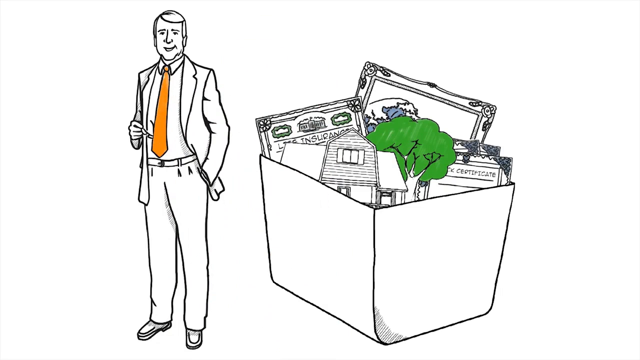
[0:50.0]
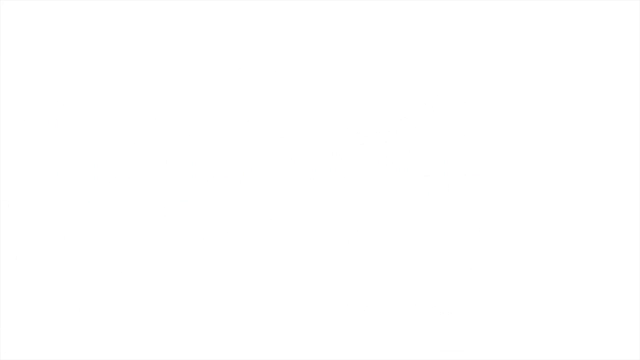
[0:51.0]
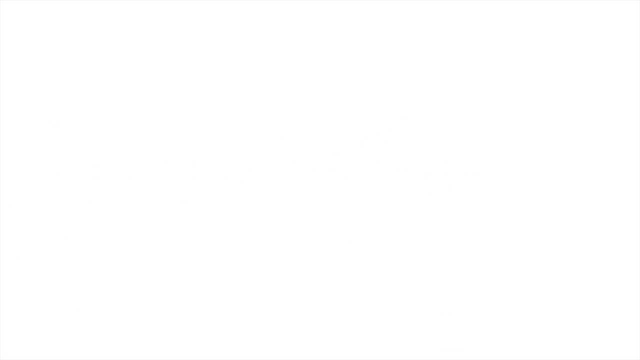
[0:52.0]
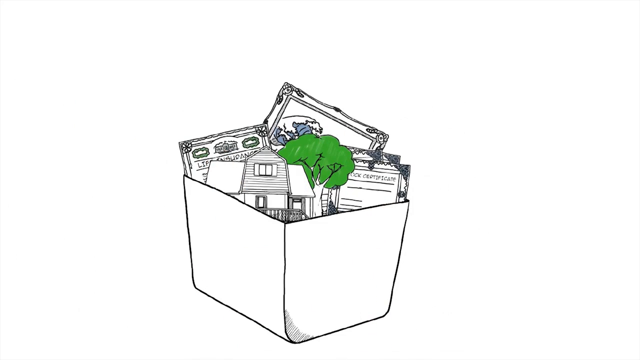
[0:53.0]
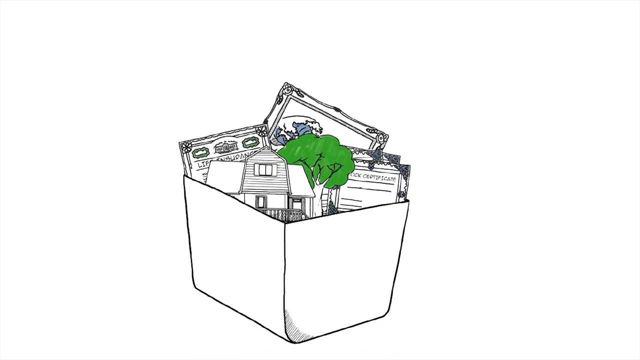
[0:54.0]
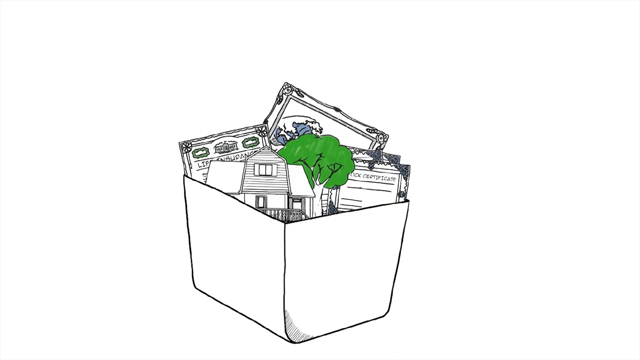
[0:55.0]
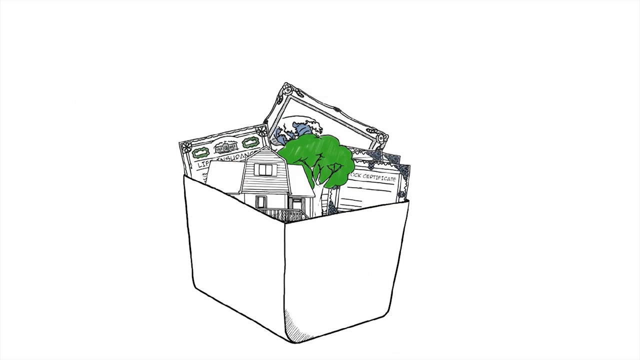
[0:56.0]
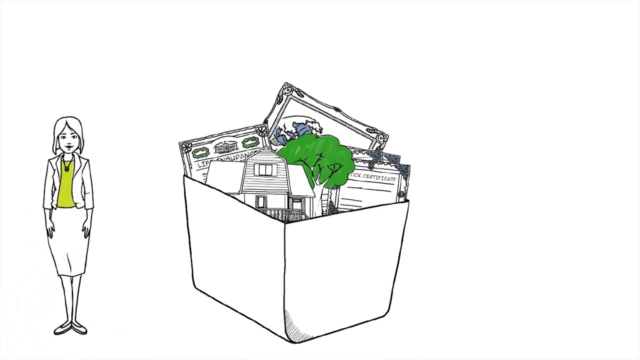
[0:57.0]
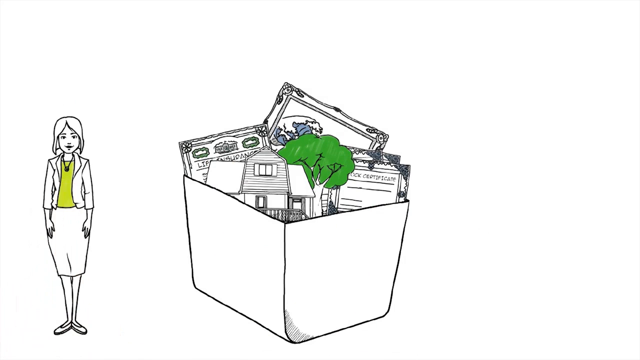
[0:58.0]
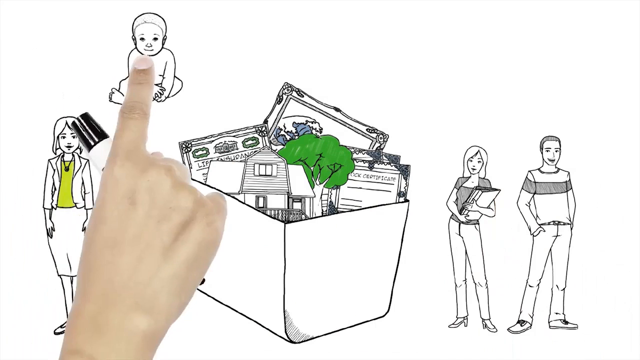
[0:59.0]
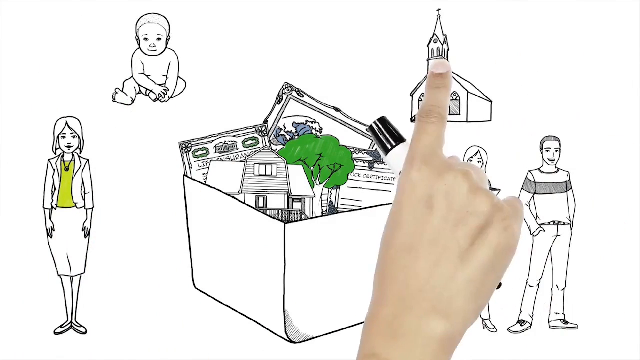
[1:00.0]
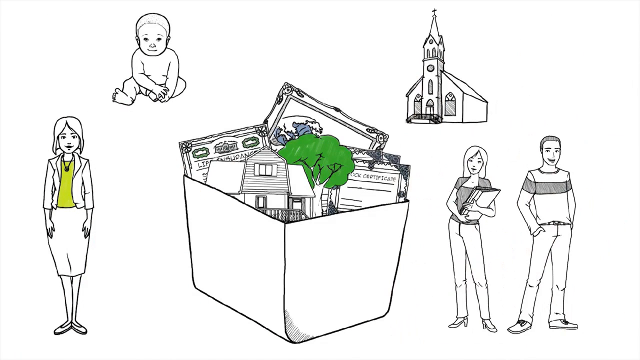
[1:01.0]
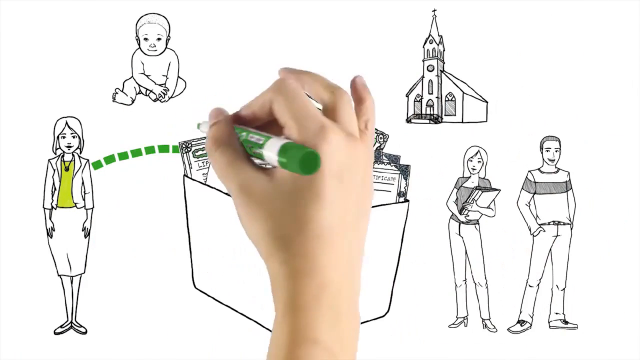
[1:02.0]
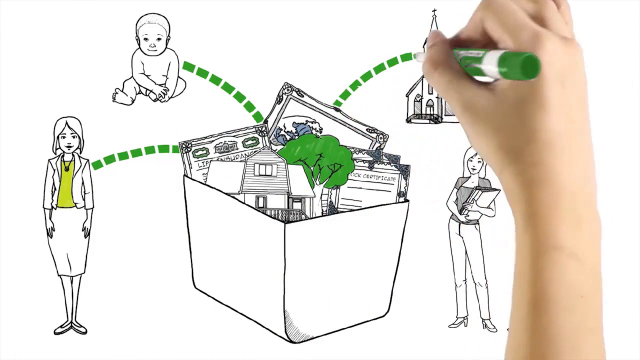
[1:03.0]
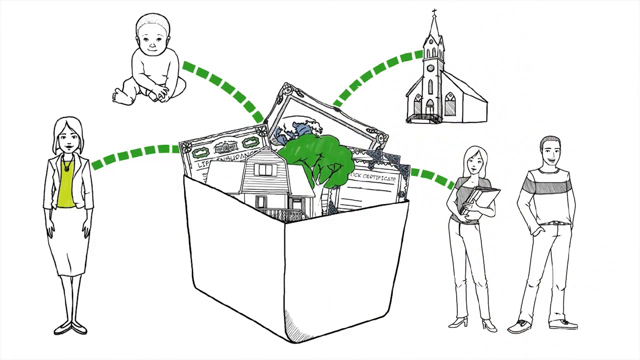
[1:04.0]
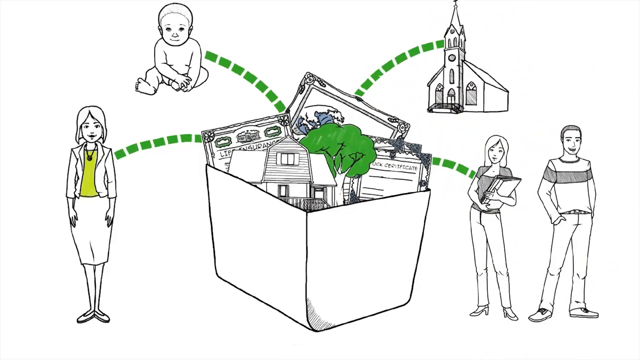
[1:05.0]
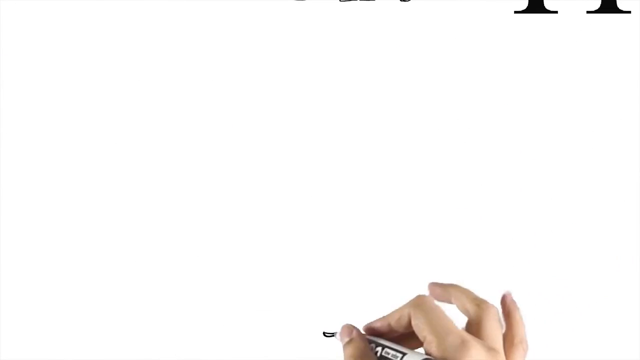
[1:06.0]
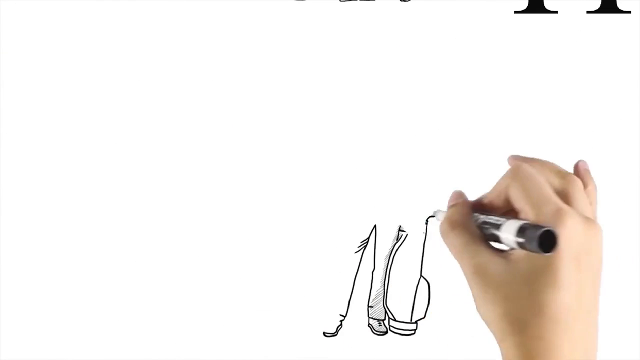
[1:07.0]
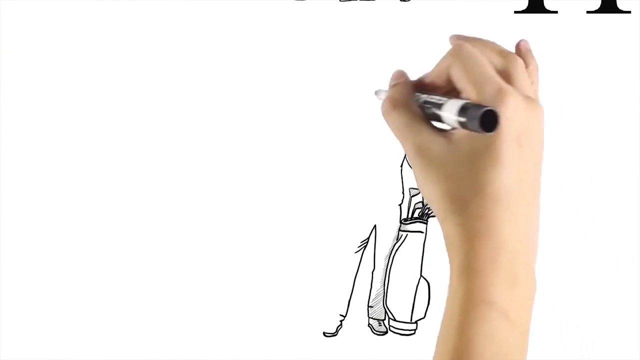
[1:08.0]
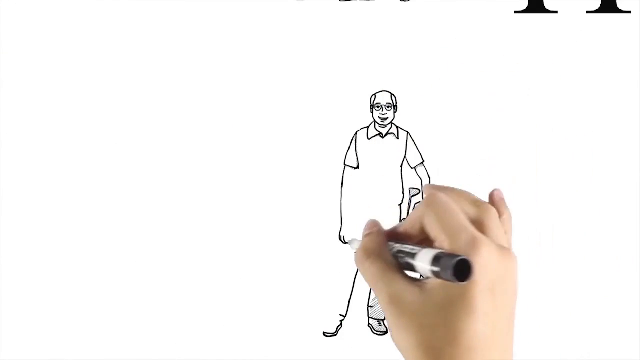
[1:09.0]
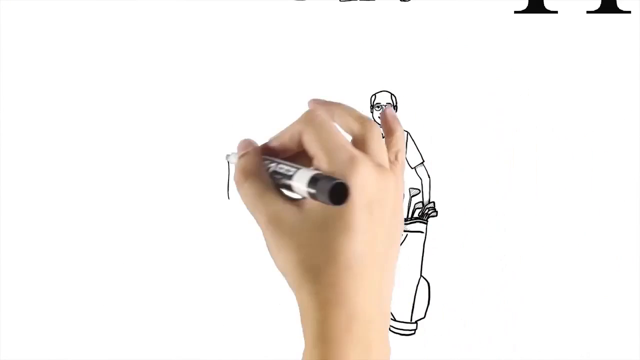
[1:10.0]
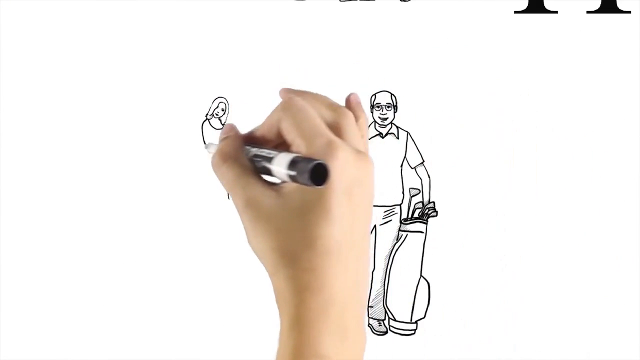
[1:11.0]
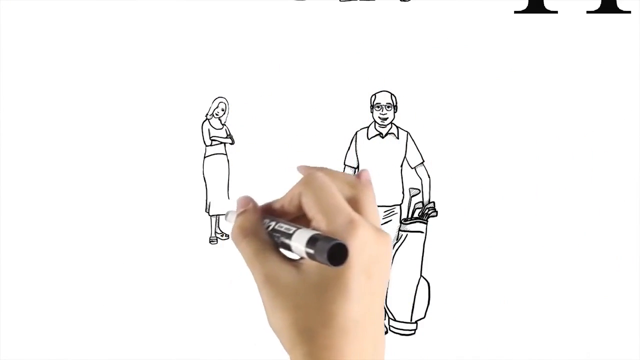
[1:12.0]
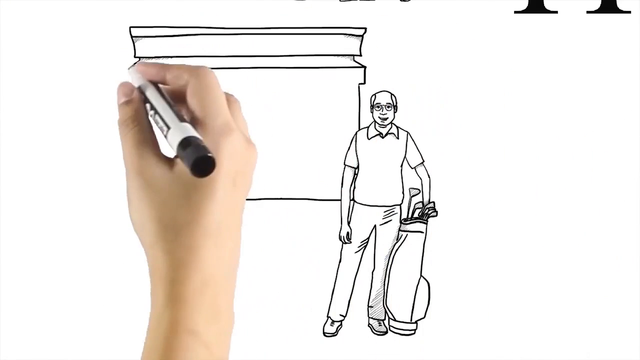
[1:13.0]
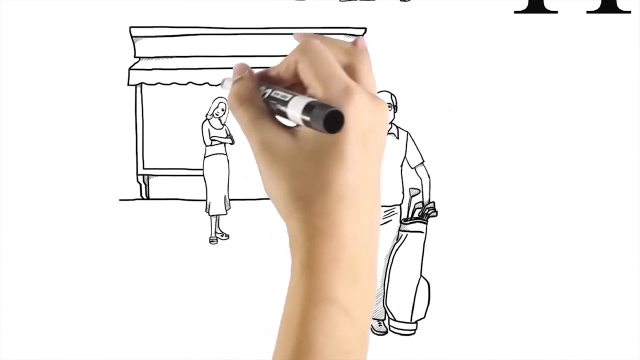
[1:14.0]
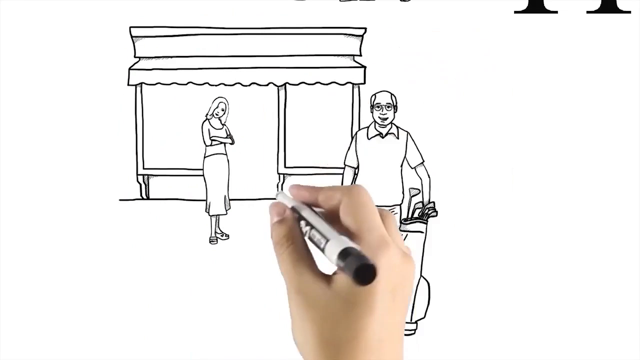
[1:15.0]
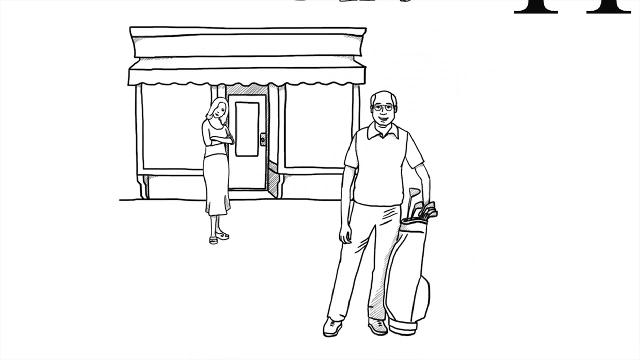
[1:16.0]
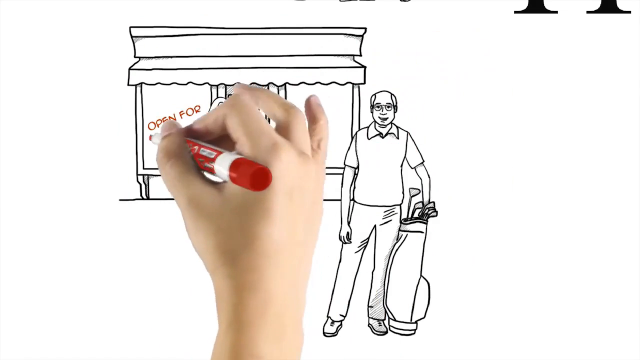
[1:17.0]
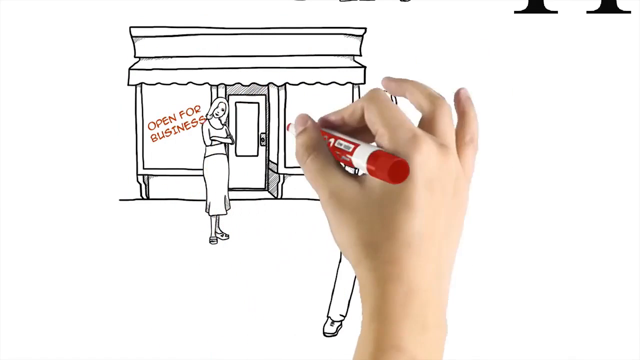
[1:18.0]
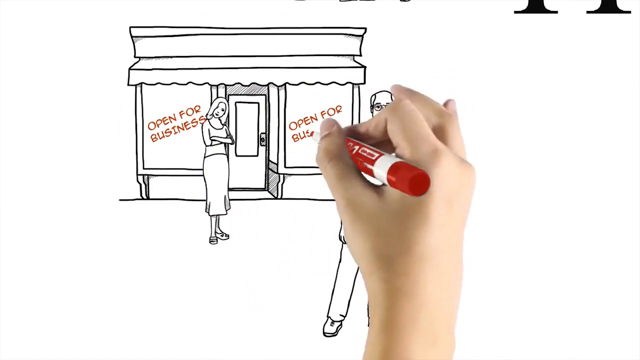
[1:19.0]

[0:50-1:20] The line drawing of the man with the orange tie and the box with all the objects in it slide off the screen to the left, then are pushed up from the bottom back into the centre. A hand pushes in a line drawing of a woman in a pencil skirt with a green top and a necklace; her top, in lime green, is the only coloured part. A finger then pushes in two uncoloured students at the bottom right, a baby at the top left and a church at the top right, all simple line drawings. The pen changes to a green board pen with a green lid, white shaft and green label, and adds green dotted lines from each of the outer drawings in the corners to the box of objects in the centre, going clockwise starting with the woman, then the baby, the church and the students. This slides off to the side, the pen changes back to black, and an older man with golf clubs is drawn alongside a woman, standing in front of a shop with an awning; "Open for Business" is written in red on both windows.